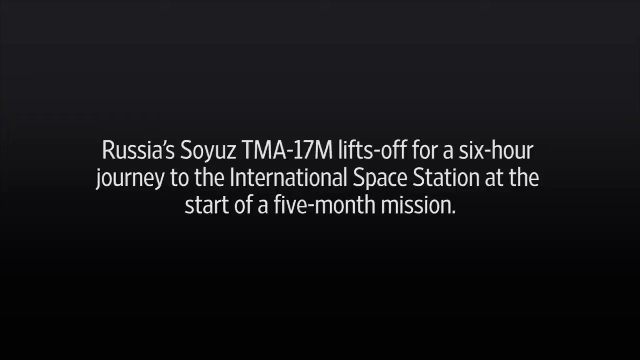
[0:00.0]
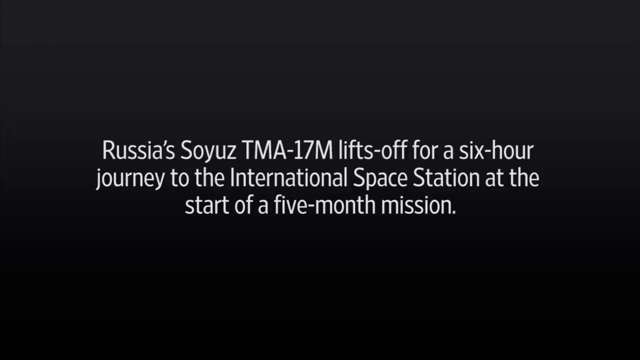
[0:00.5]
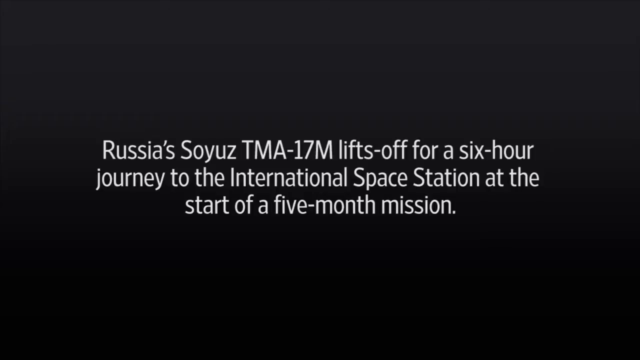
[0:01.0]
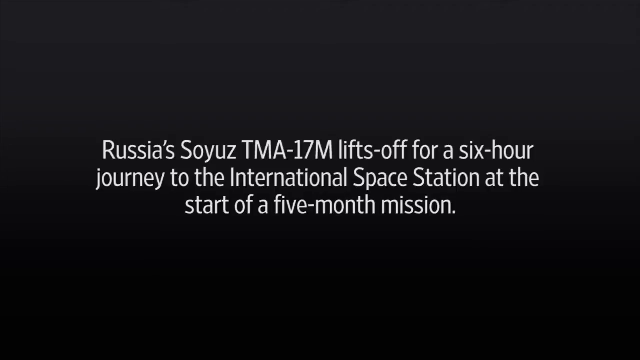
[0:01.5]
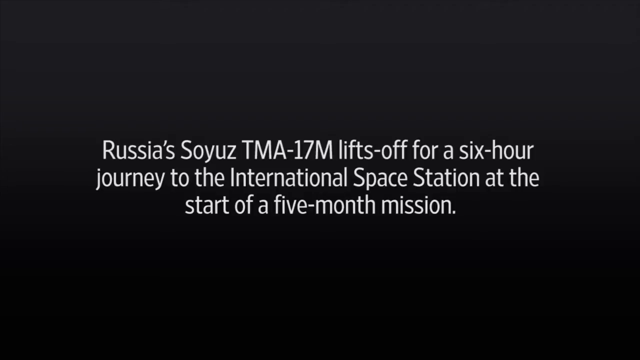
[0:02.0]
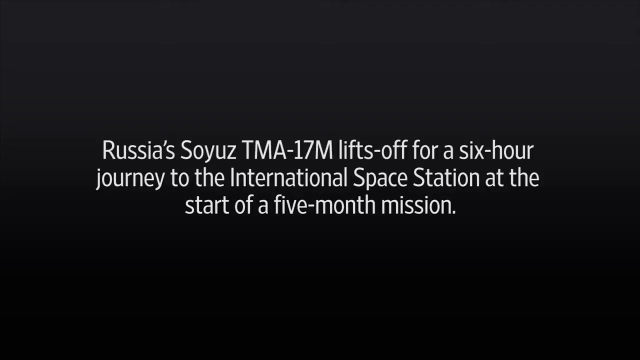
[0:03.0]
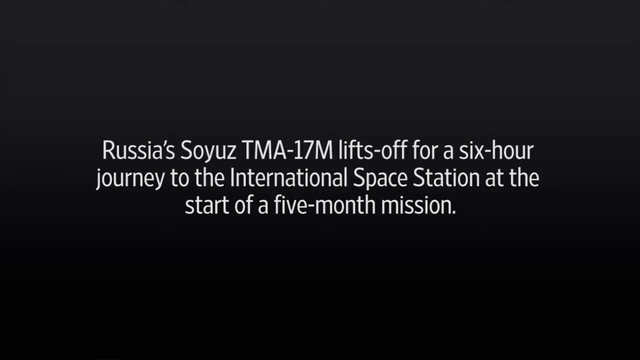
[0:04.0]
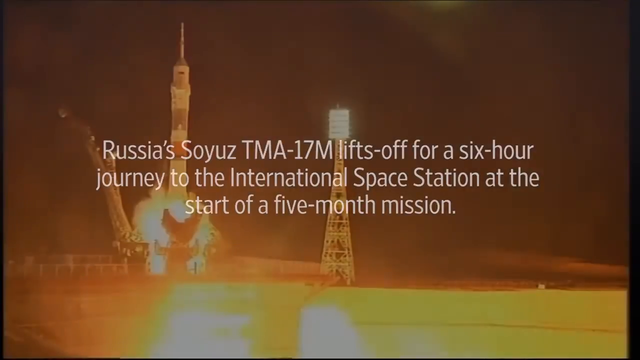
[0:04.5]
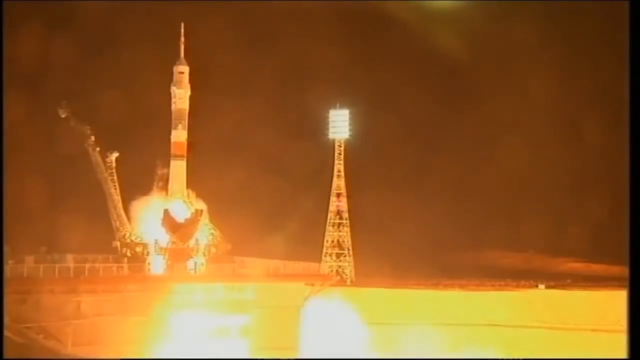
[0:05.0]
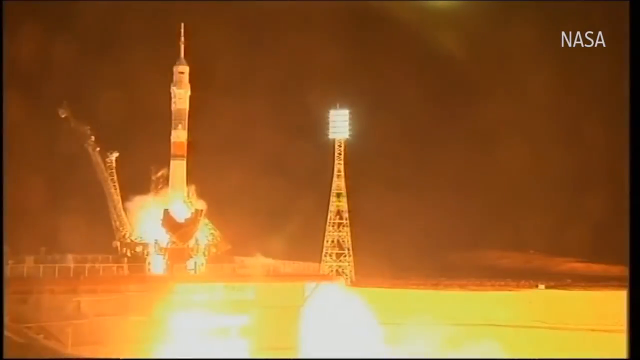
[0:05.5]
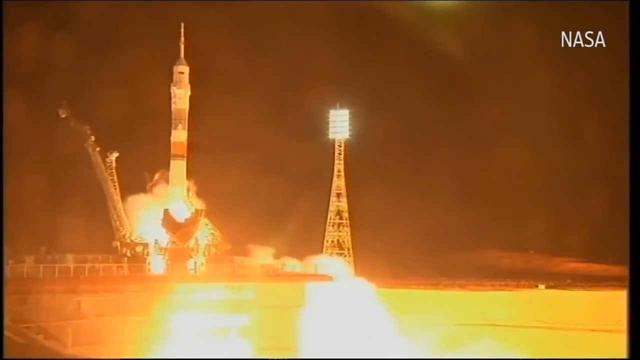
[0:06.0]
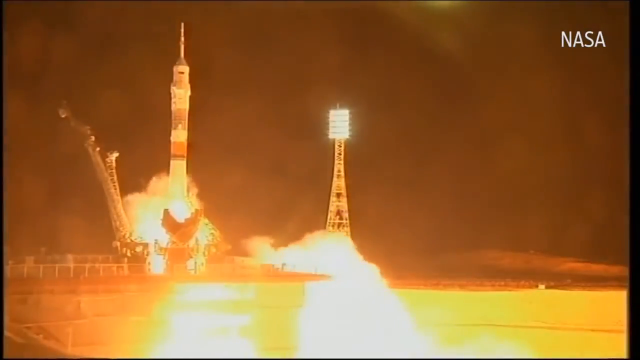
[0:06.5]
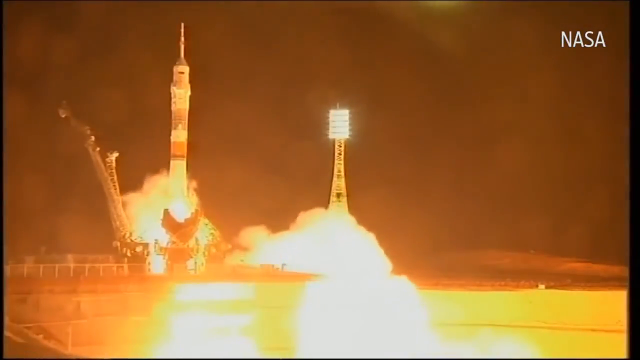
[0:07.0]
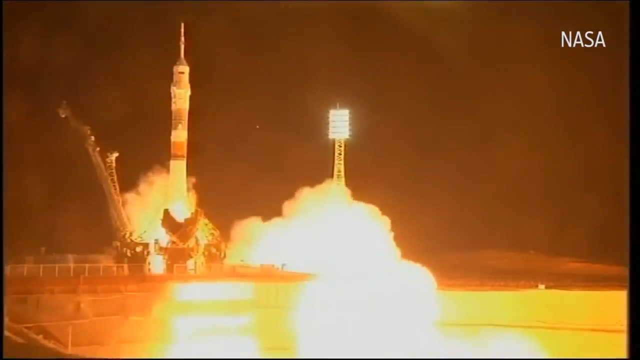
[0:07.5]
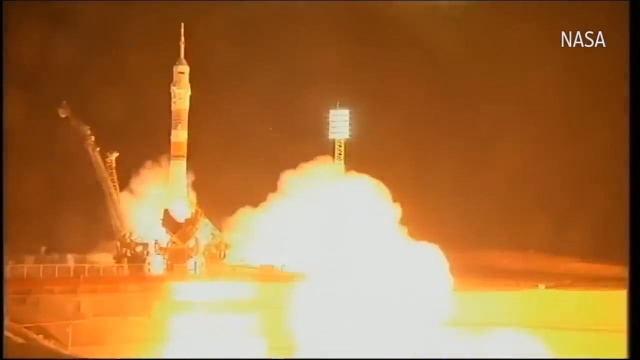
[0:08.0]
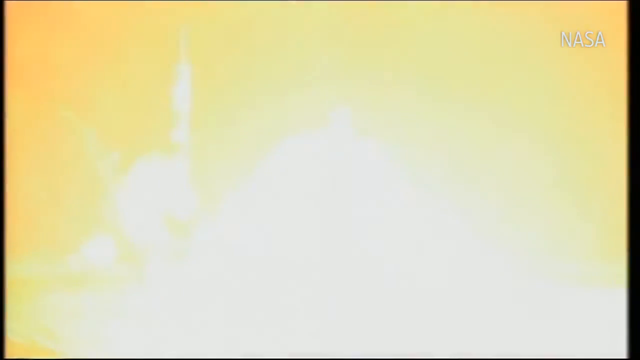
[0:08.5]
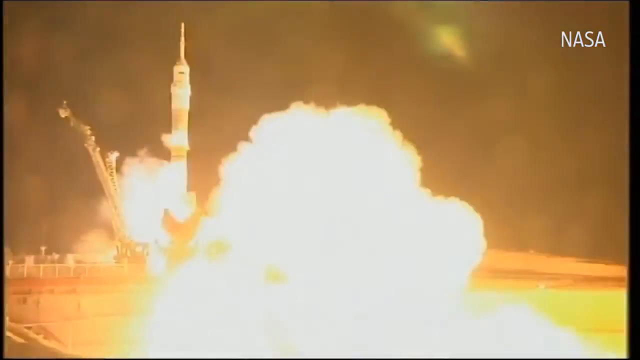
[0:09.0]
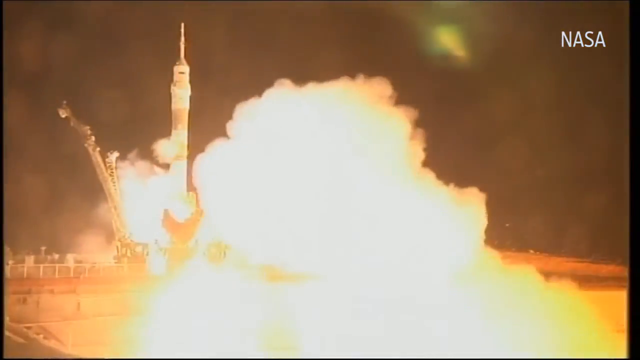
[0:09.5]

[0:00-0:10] White text appears in the centre of a completely black screen, reading "Russia's Soyuz TMA-17M lifts off for a 6 hour journey to the International Space Station at the start of a 5 month mission." Footage then shows the rocket itself lifting off from a platform. The platform it was mounted on has fallen away, allowing it to lift off. Bright lights to the right shine down on it, and the launch appears to be taking place at night. The rocket produces an enormous amount of smoke and a large fireball burns underneath it as it lifts off from the ground.